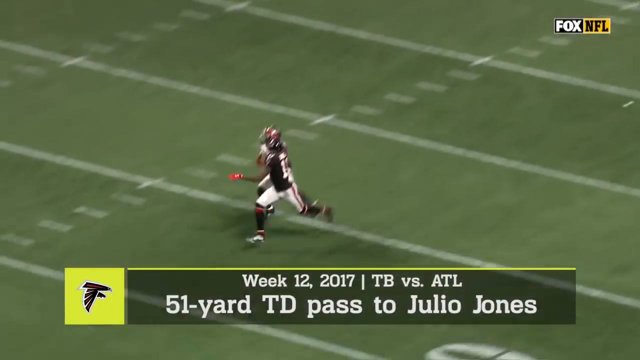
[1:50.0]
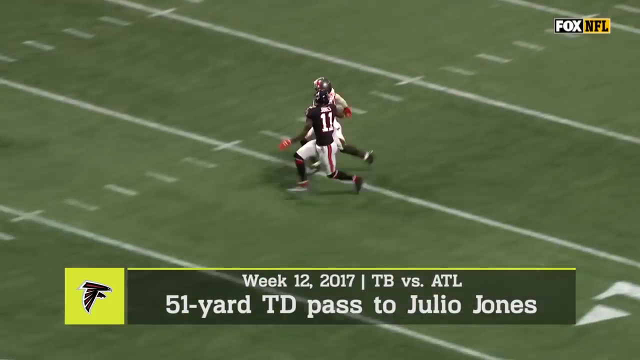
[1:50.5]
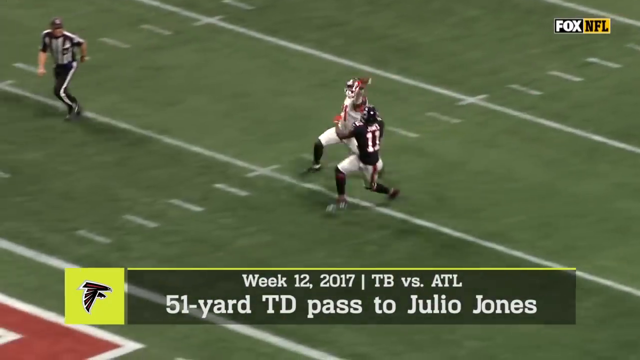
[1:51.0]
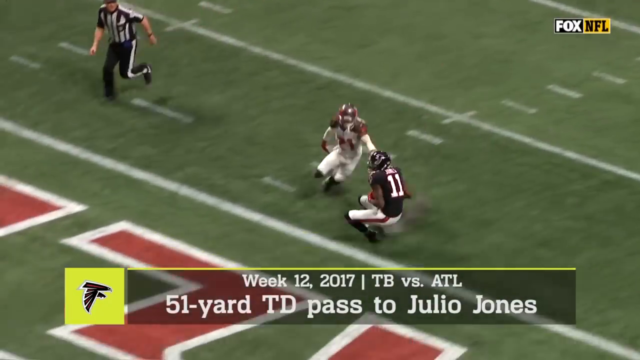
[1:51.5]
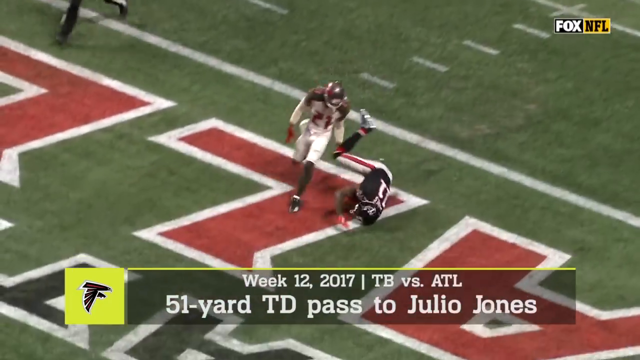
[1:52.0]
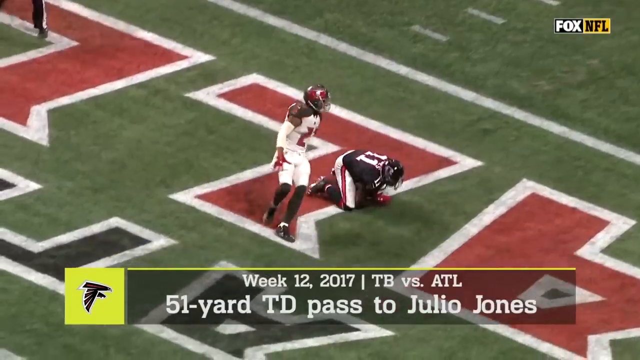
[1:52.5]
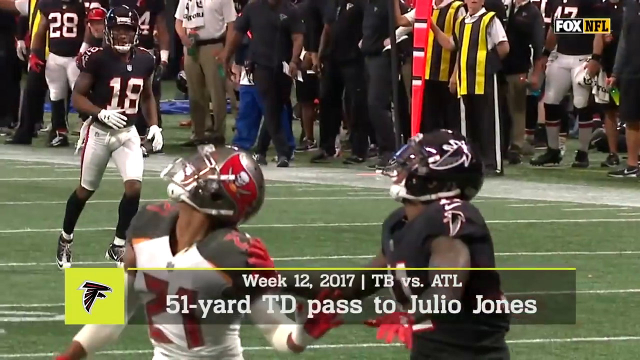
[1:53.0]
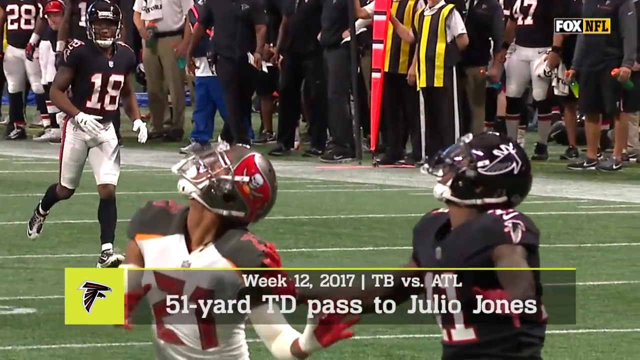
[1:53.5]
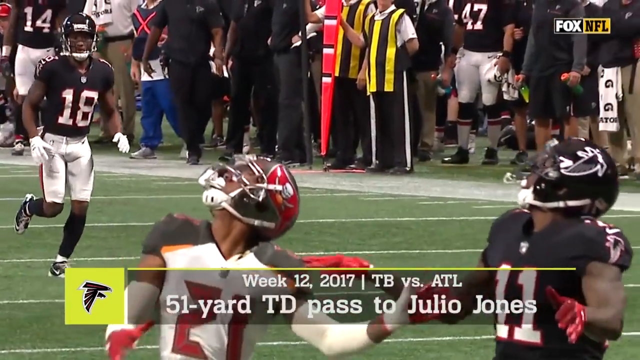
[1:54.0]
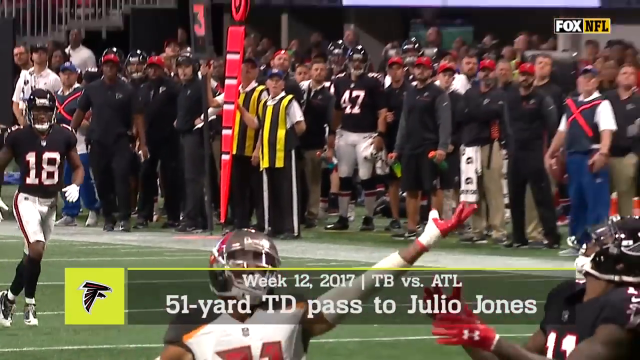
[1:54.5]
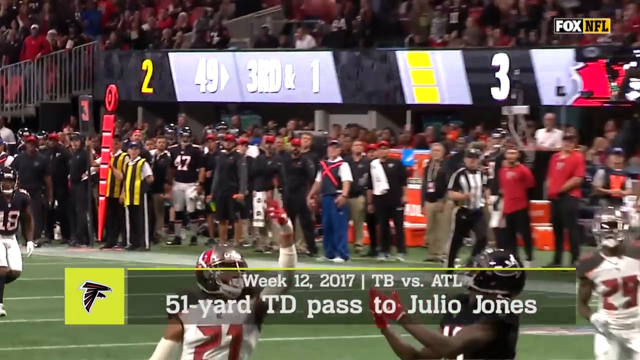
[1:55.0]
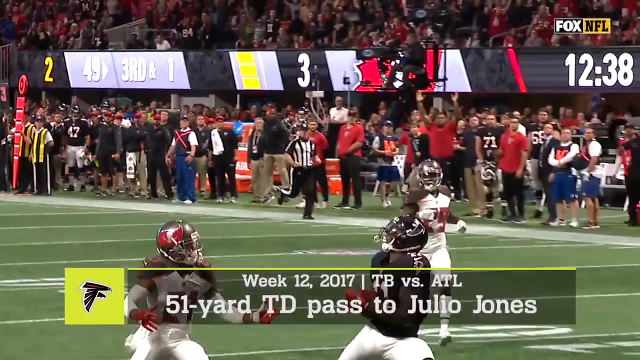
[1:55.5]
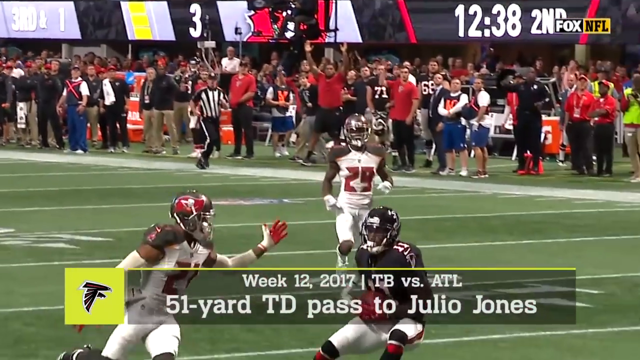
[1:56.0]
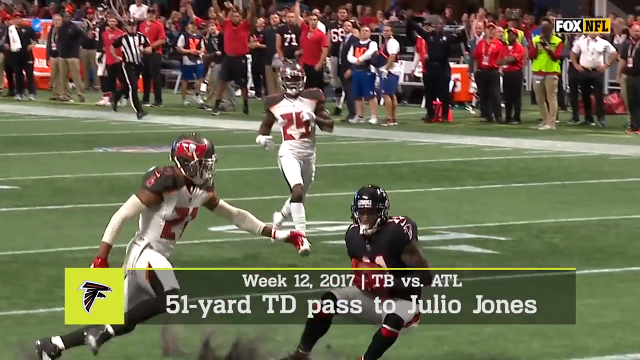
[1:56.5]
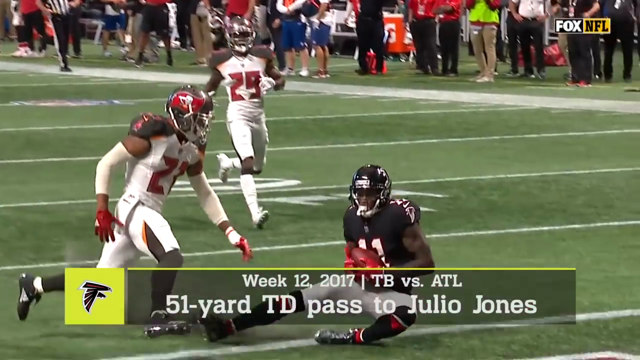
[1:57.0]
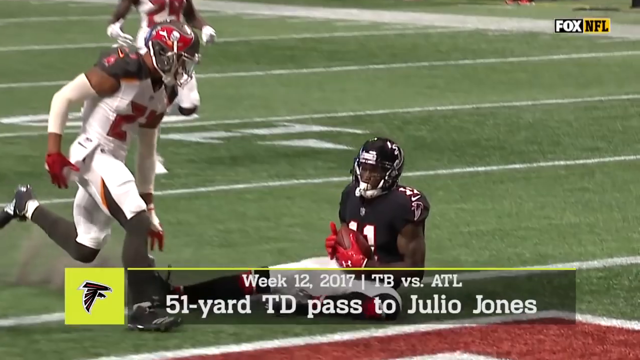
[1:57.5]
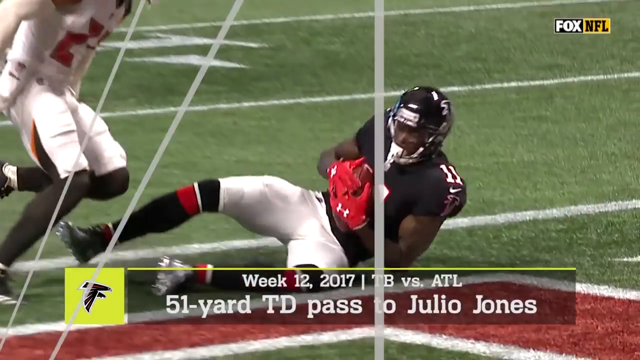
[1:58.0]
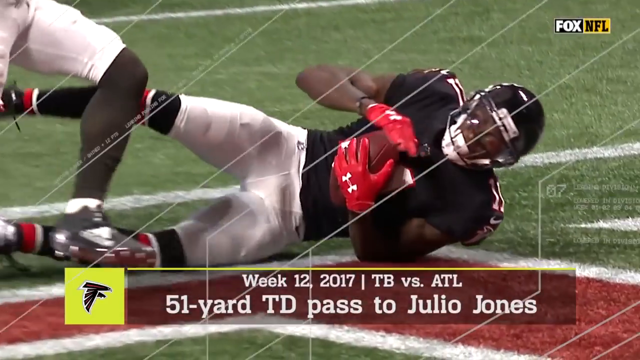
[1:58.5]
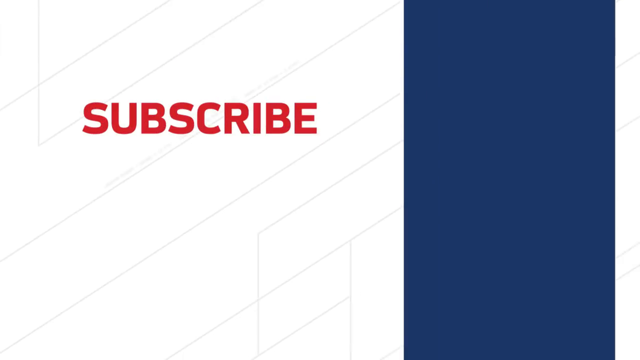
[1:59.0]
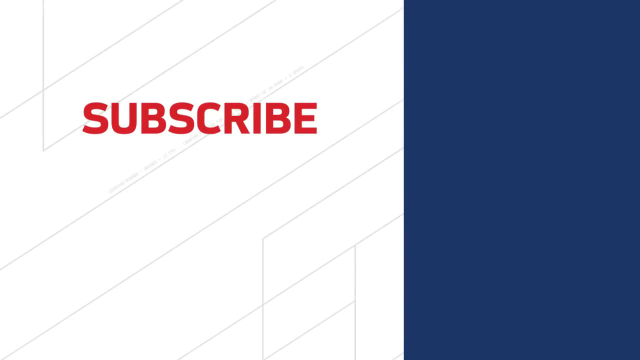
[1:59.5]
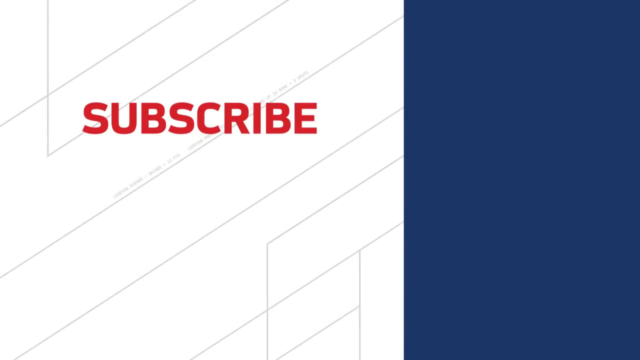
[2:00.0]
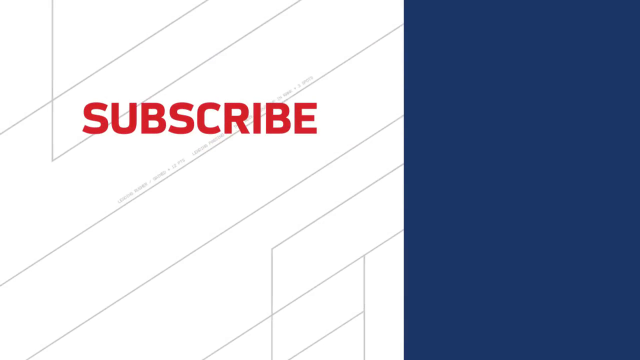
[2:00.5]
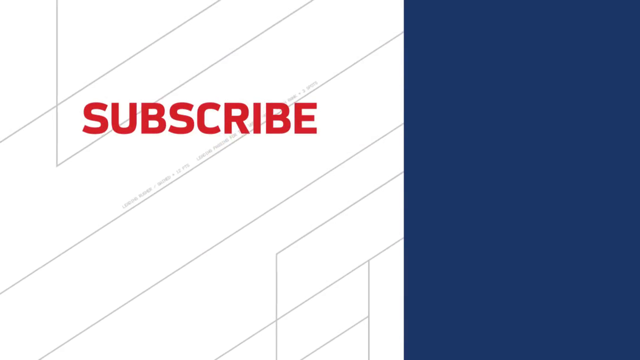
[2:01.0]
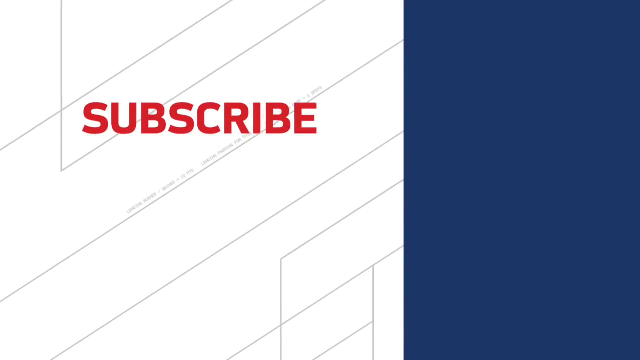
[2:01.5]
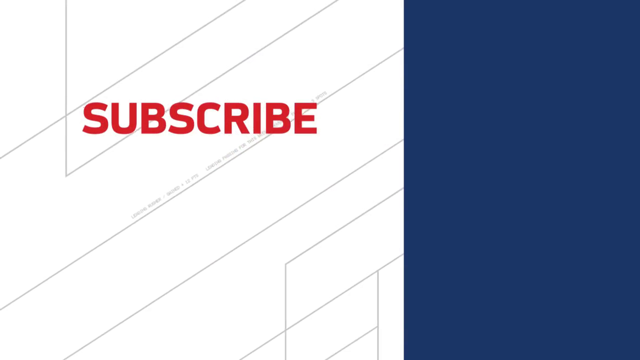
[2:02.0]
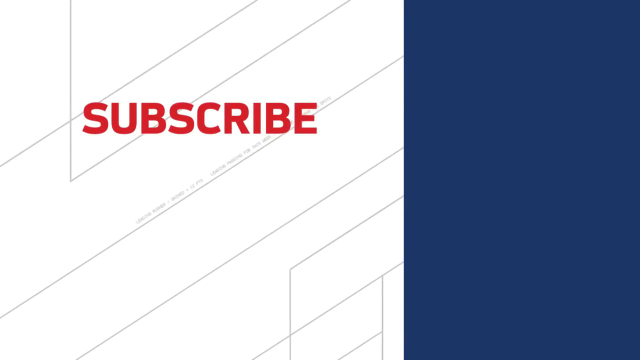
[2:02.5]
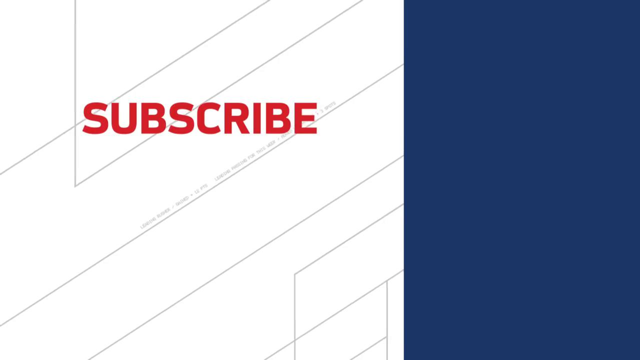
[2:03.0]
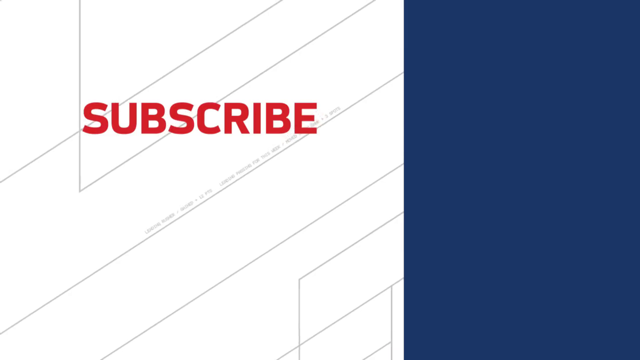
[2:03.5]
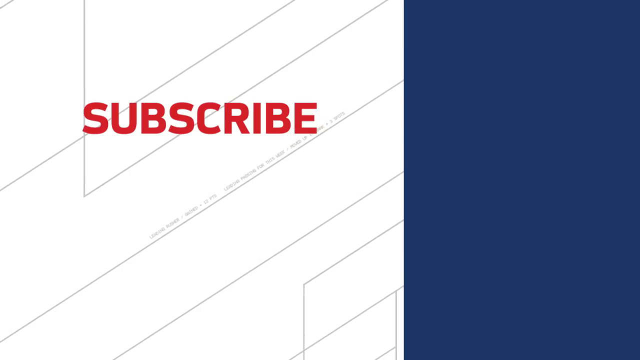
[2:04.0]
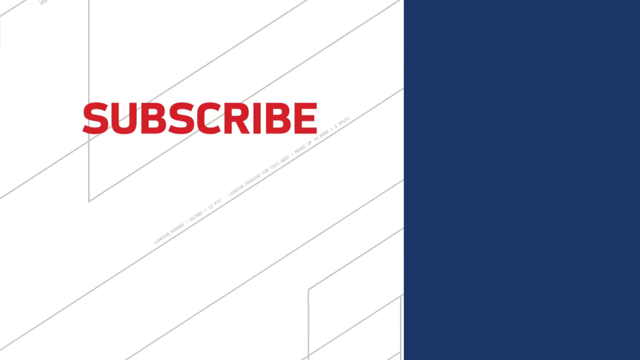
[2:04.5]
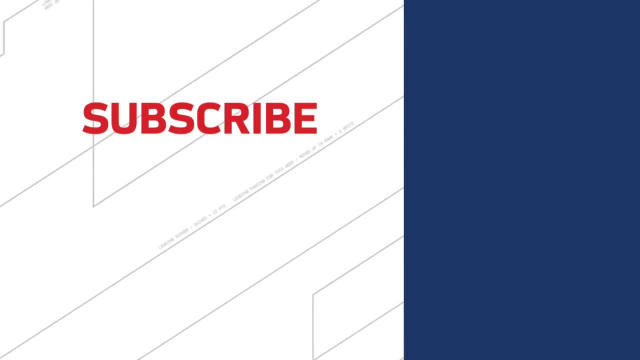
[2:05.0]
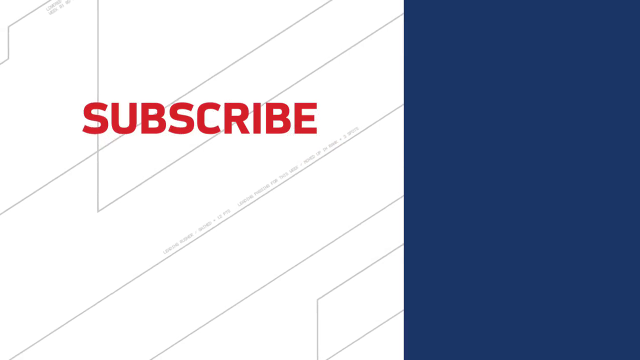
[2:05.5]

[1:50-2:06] Julio Jones, in a black jersey with the number 11, catches a ball in the end zone, pulls it close to his torso and falls to the ground. A graphic then appears with the word "subscribe" in red on a white background and the NFL logo beneath it. Below and to the right is a clickable square with the words "Game Pass", leading to NFL.com for a free trial of NFL Game Pass. To the right are two thumbnails, one above the other. The top one is titled "Cam Ward's Pro Day and which team should trade up for Travis Hunter" and shows two smiling men; the one on the left has a graphic beneath him reading "Move the Sticks", and the one on the right has none. A player with a football in his hand is in the middle of a field, apparently at a training camp since he is out of uniform. The bottom thumbnail shows an athlete endorsing some kind of cleat, likely football cleats, and is titled "My Cause, My Cleats, NFL". It is part of a playlist of 19 videos.